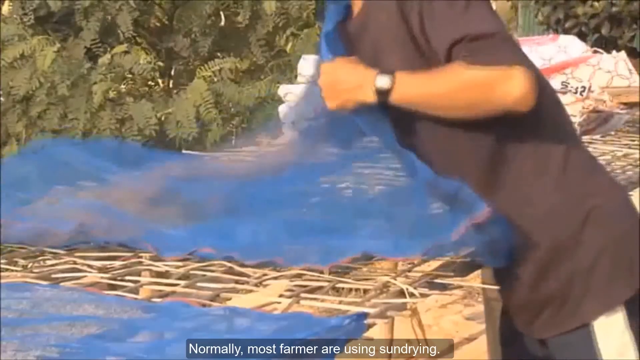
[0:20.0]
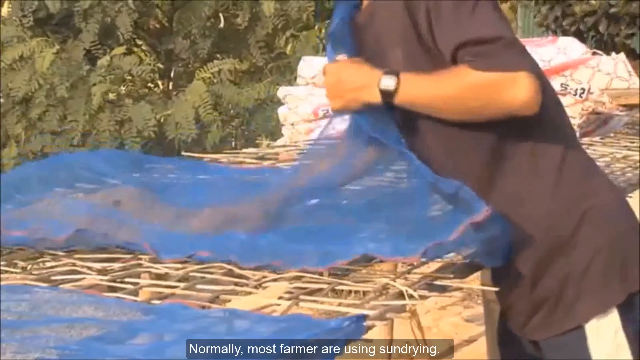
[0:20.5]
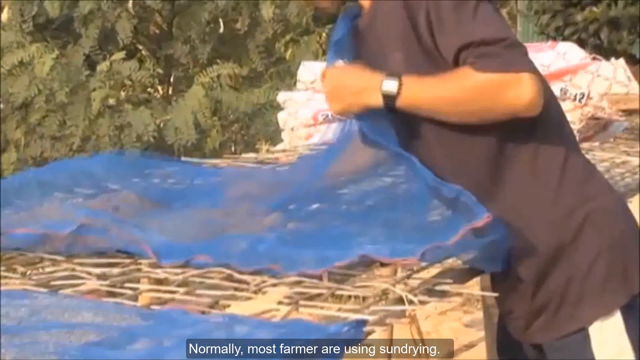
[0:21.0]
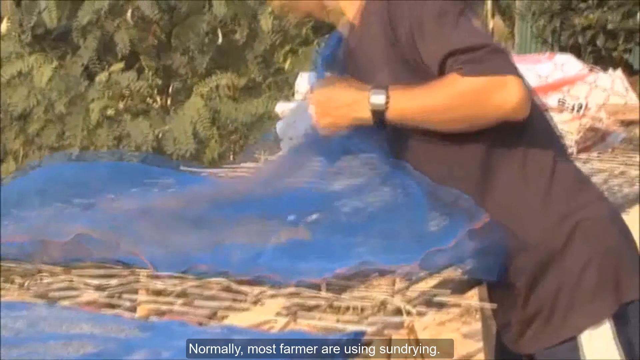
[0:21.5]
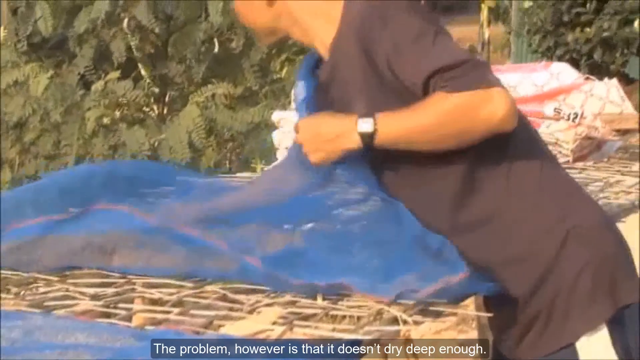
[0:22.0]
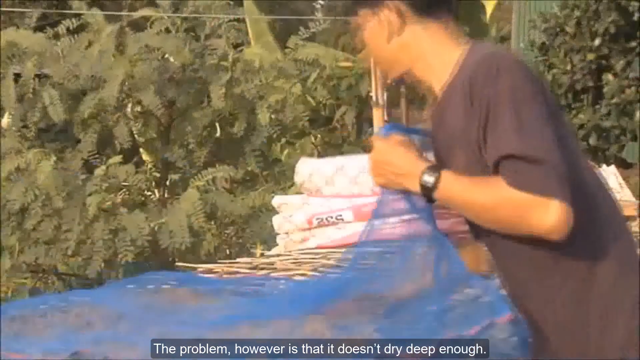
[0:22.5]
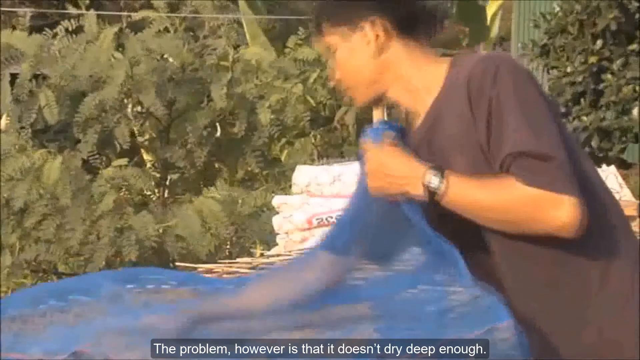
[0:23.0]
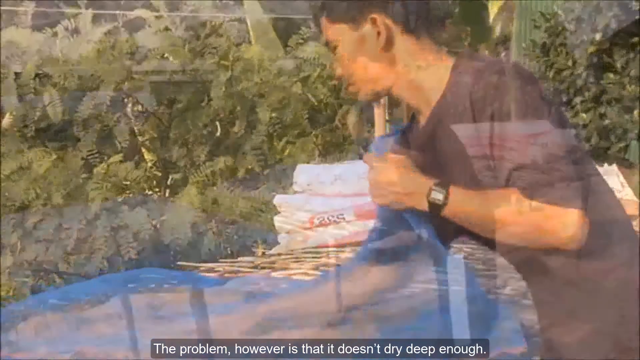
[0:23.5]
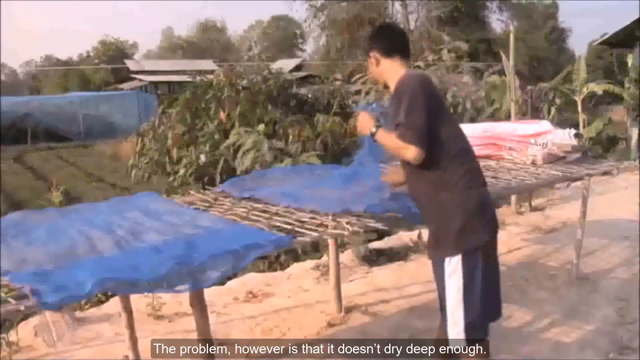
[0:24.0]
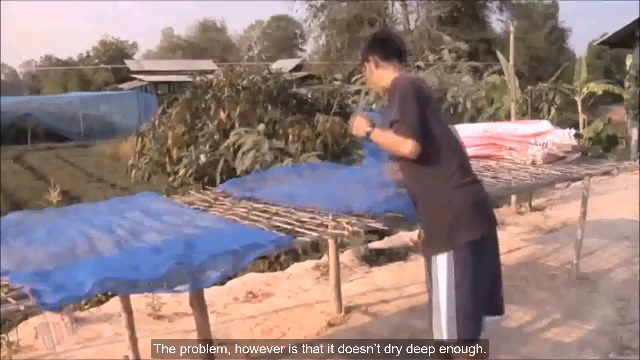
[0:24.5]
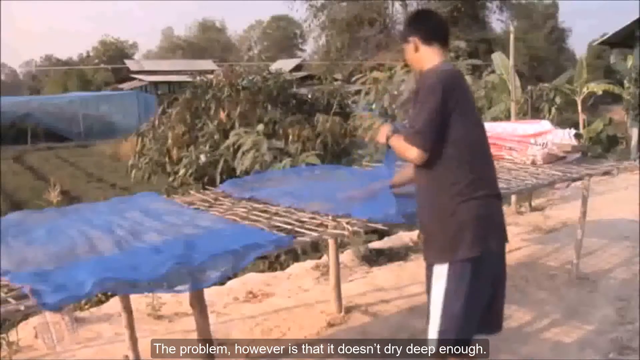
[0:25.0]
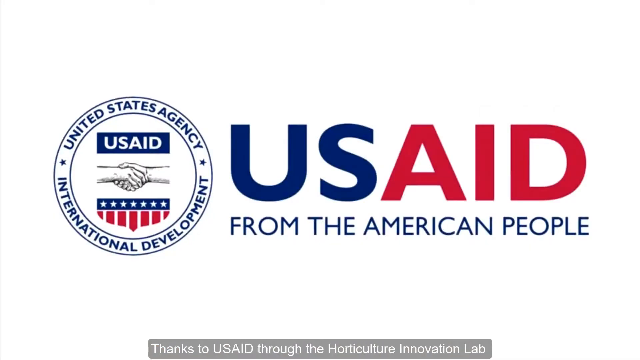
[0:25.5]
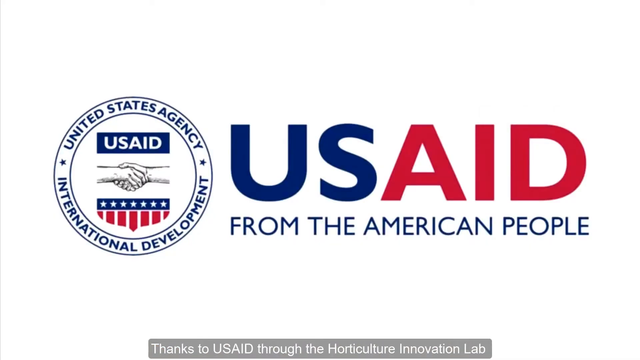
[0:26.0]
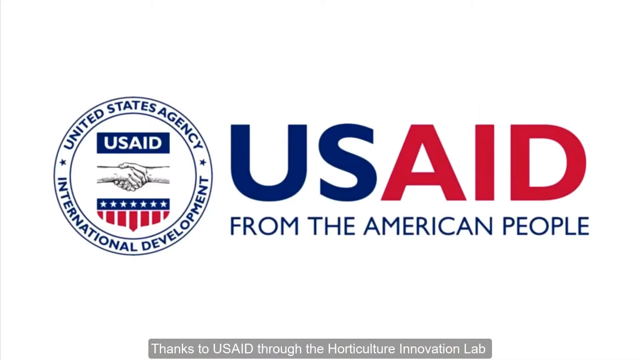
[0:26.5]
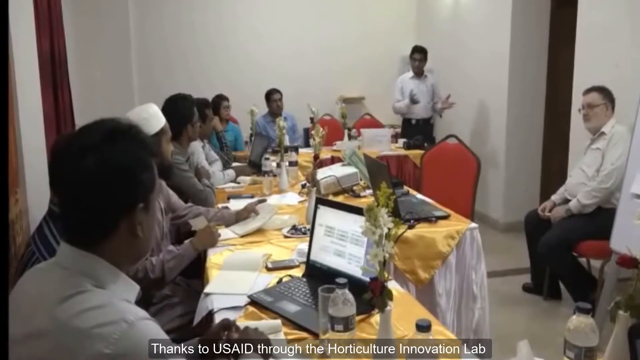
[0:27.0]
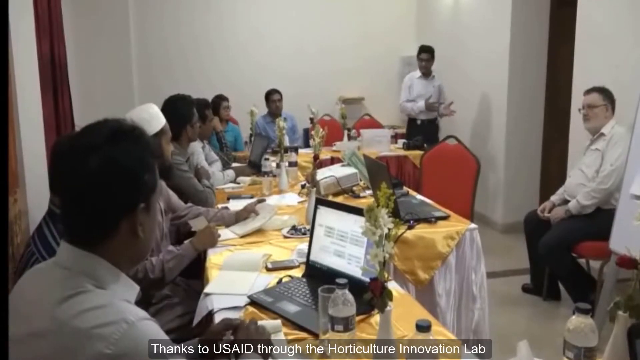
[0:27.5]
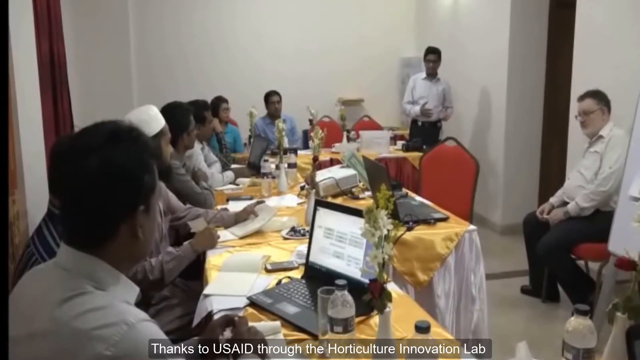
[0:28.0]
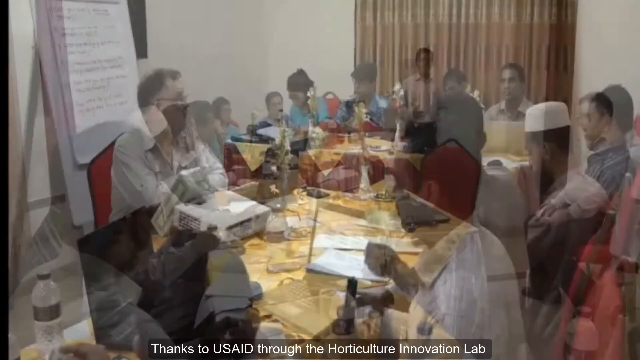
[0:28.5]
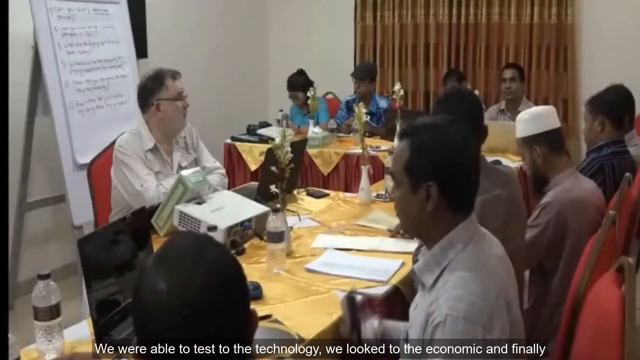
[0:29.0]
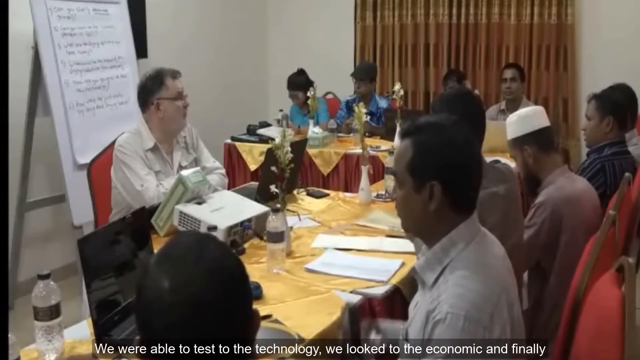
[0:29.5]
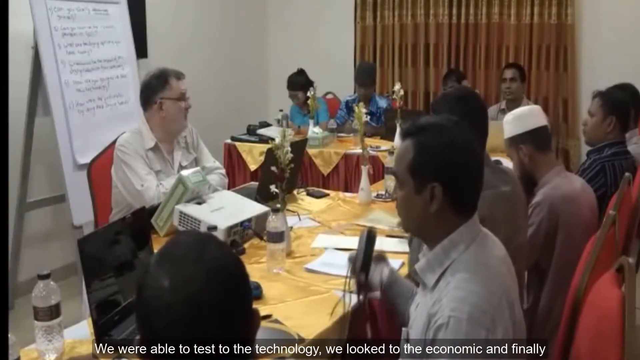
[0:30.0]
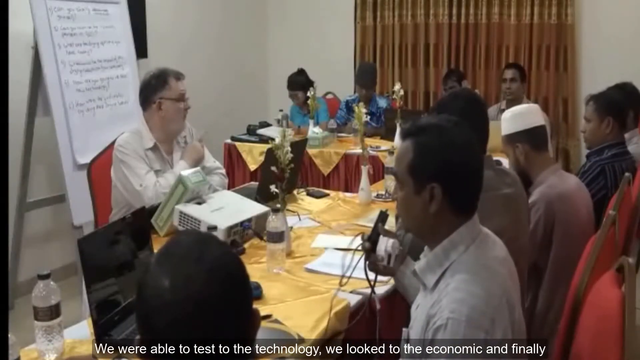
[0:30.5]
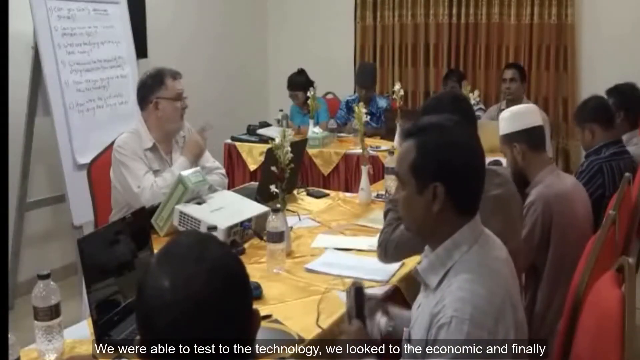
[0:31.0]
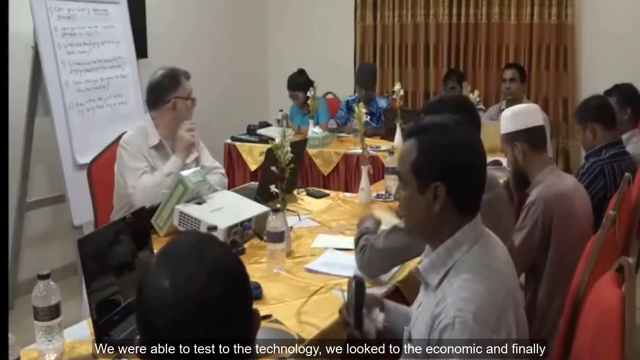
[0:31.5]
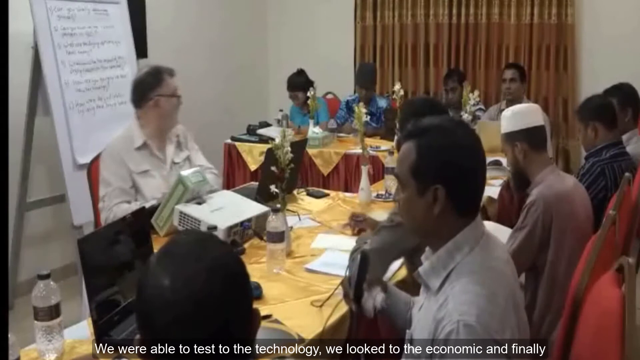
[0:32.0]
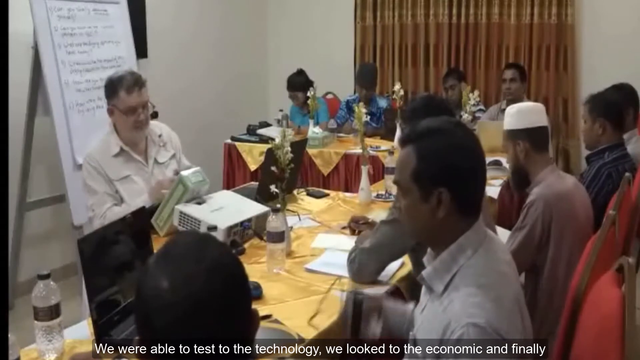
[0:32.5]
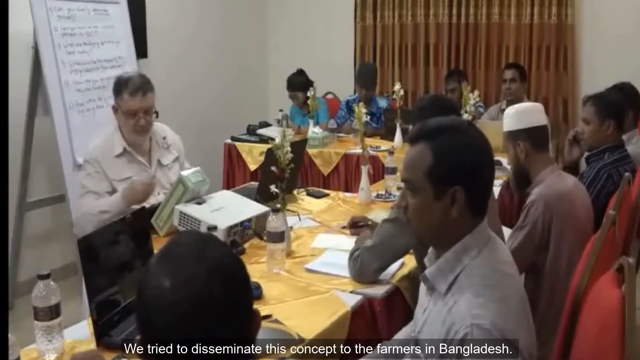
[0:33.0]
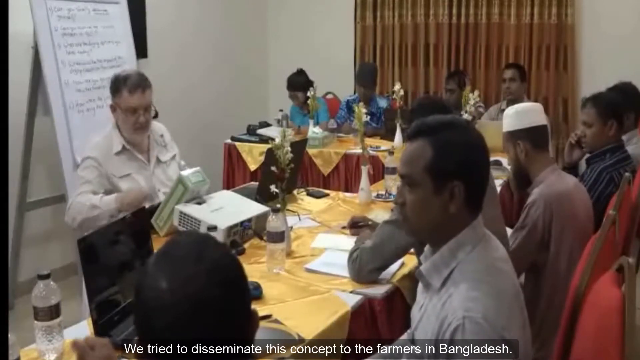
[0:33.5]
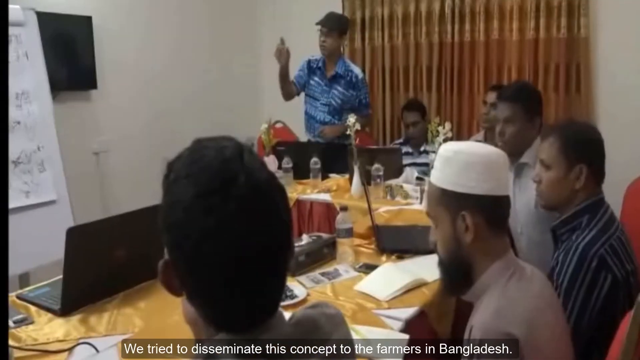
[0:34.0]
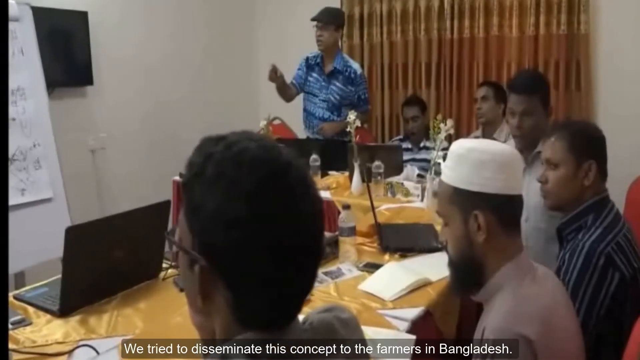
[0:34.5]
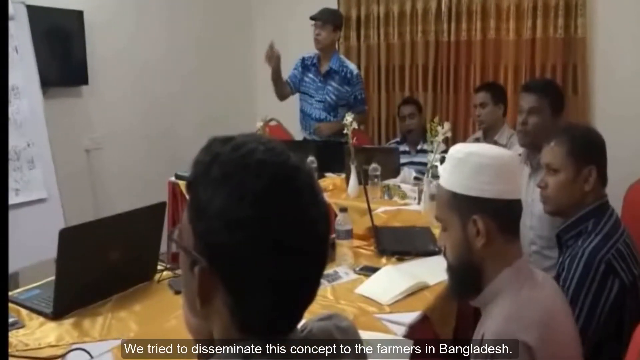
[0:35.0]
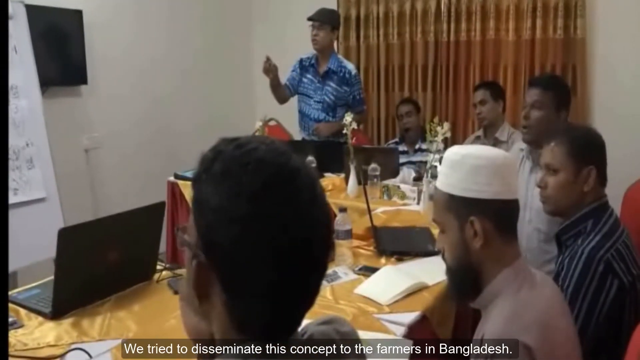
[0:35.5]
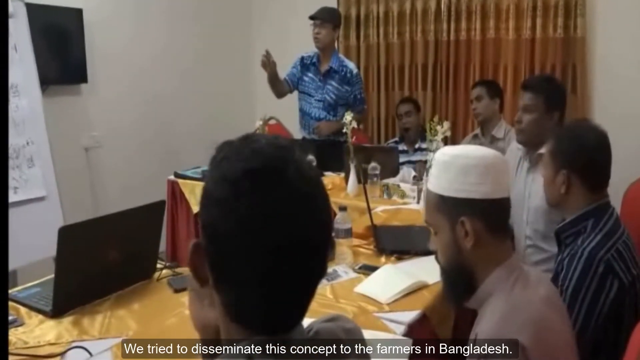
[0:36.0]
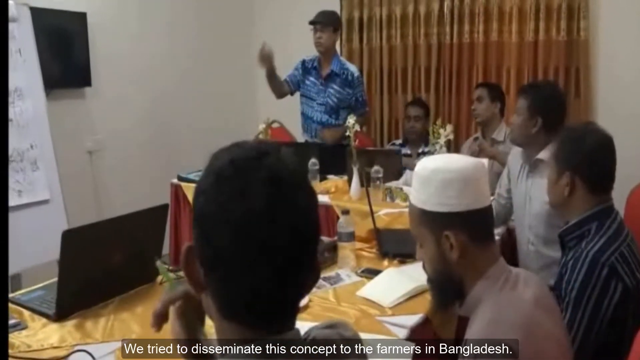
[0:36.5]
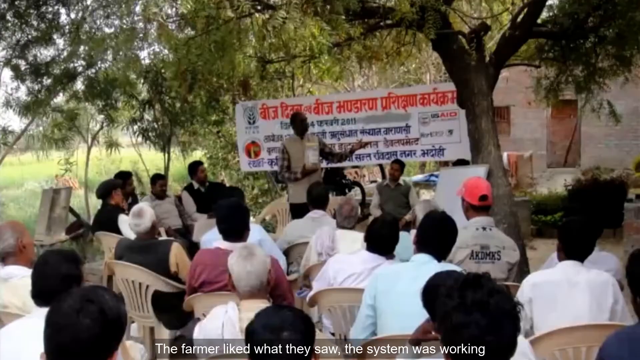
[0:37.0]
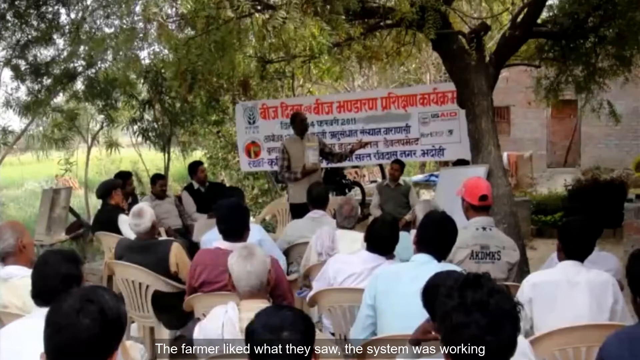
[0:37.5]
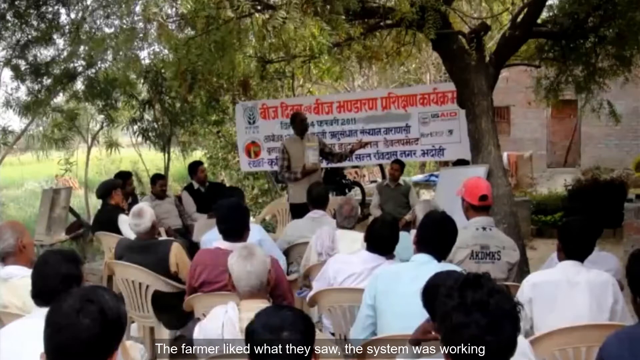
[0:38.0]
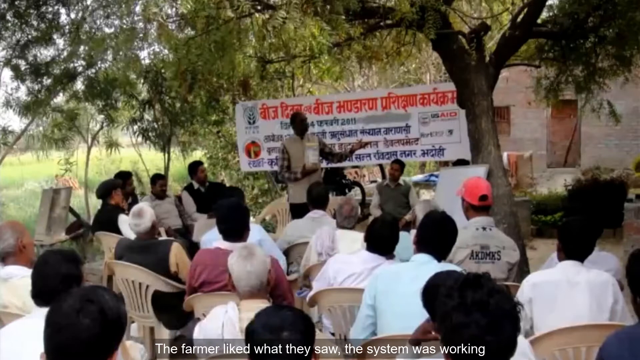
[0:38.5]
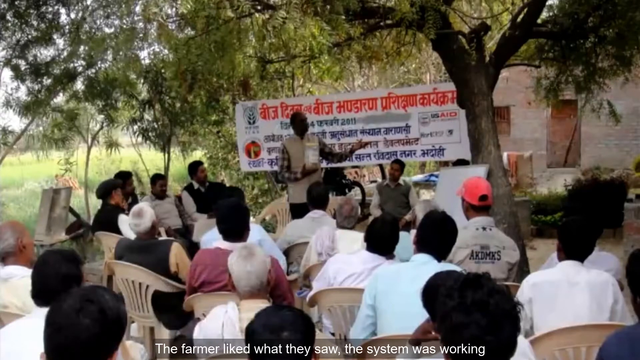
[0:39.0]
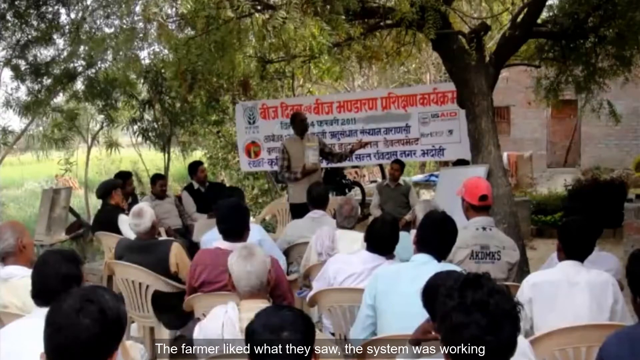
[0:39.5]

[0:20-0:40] An outdoor video shows a person reaching inside a light blue bag that probably holds grains or something similar. Their head is not visible, only their torso leaning forward and their bent left arm, with a wristwatch on the left wrist, holding the bag open as they reach inside. Green tree leaves are in the background. The camera pulls away to show more context: the person appears to be Asian, maybe Bangladeshi, doing some kind of work outdoors. A screen follows with the USAID logo on the left and, on the right in blue and red, "USAID, from the American people". Next is a video of an indoor meeting, some kind of conference, with maybe 10 people or so sitting around tables talking; it looks kind of busy, and the conference room is not a very nice one. In various snippets, someone stands up, gesturing and talking to someone else, with one person in the center who might be the man seen at the beginning, and a group of locals around him taking turns talking and gesturing to him. The video then cuts to an outdoor picture.